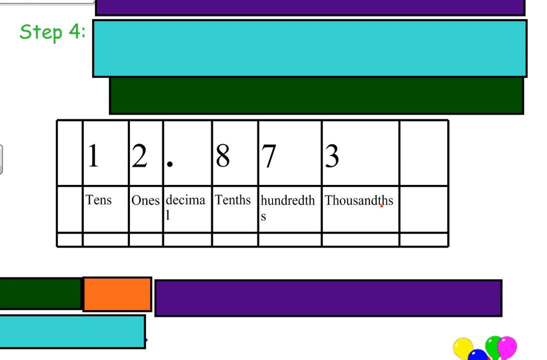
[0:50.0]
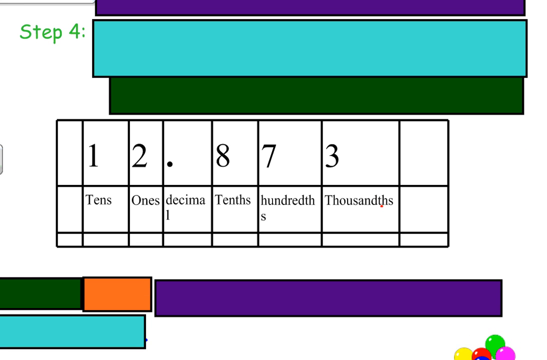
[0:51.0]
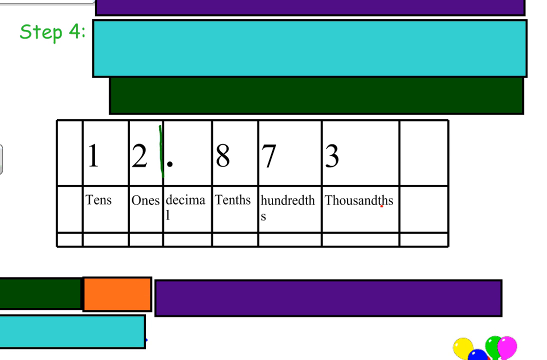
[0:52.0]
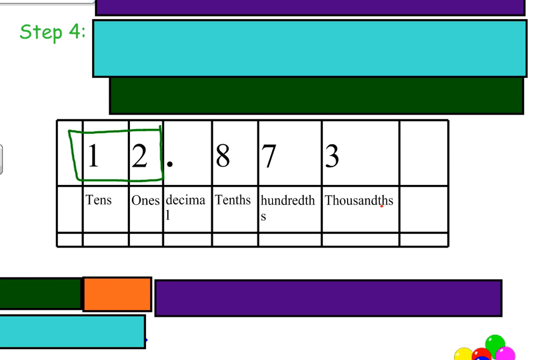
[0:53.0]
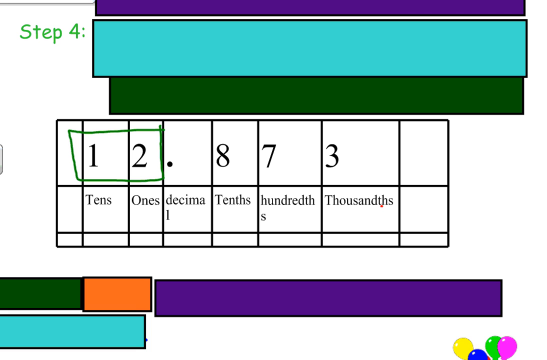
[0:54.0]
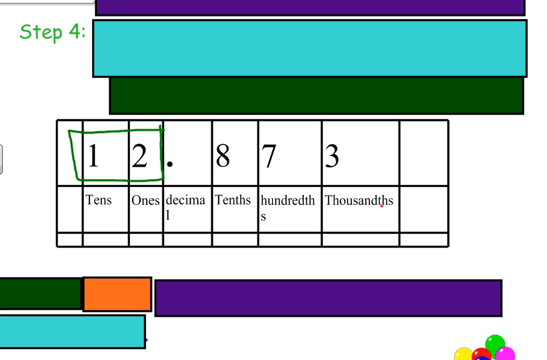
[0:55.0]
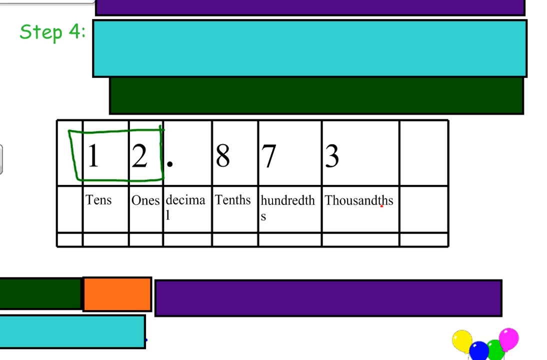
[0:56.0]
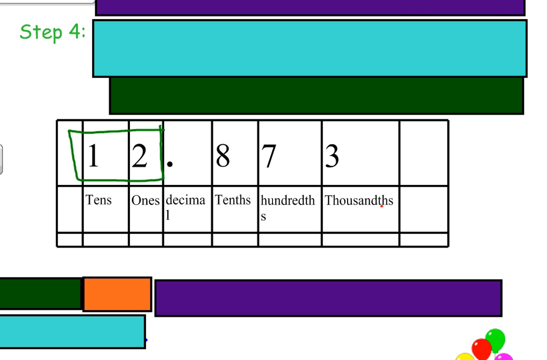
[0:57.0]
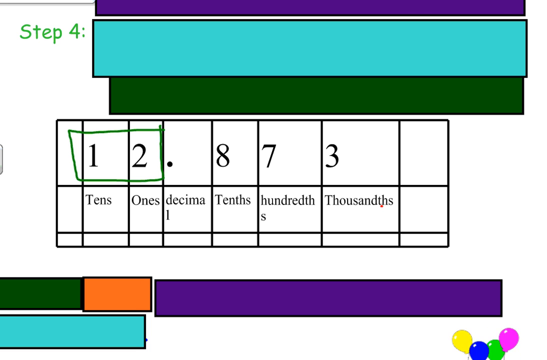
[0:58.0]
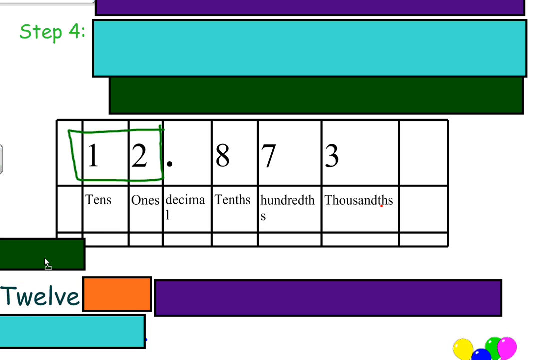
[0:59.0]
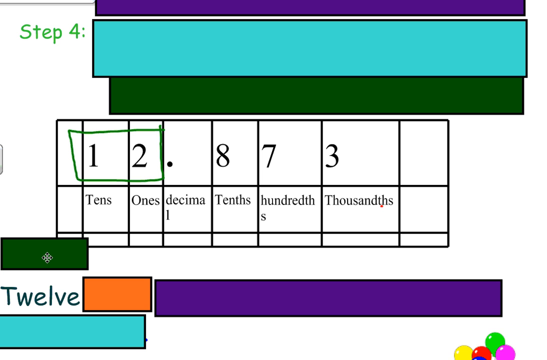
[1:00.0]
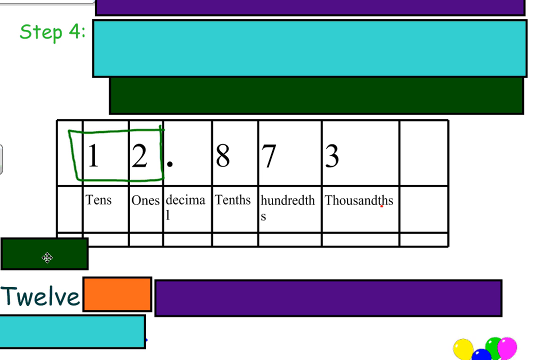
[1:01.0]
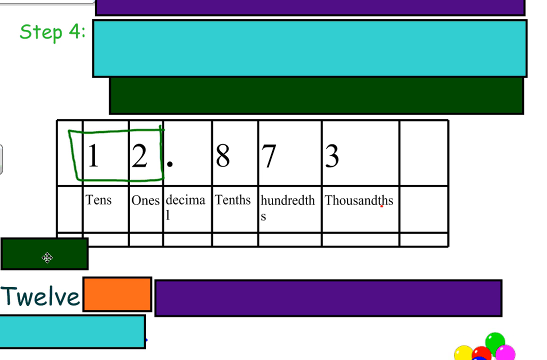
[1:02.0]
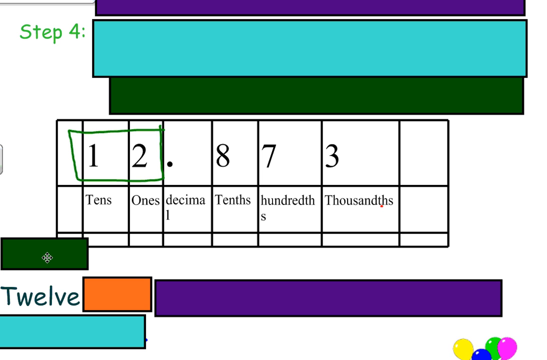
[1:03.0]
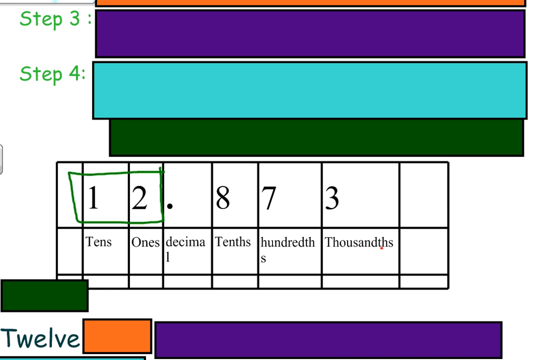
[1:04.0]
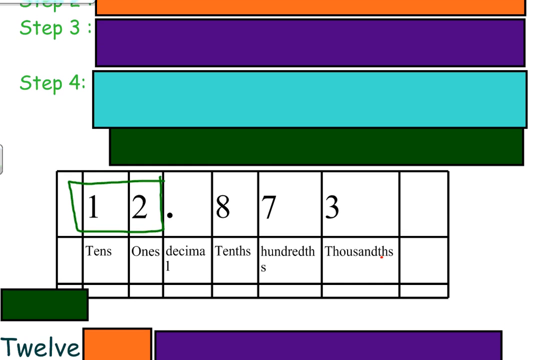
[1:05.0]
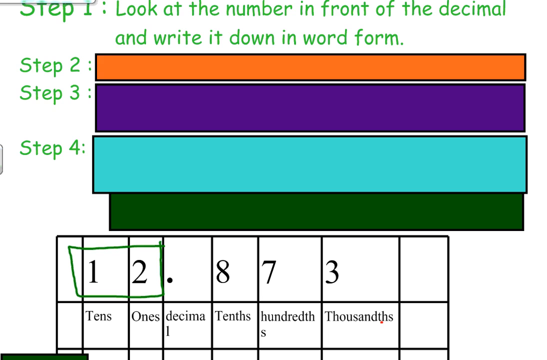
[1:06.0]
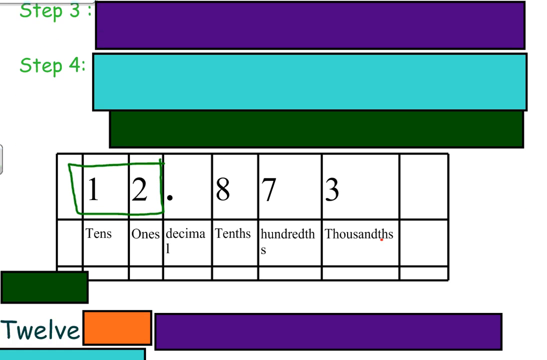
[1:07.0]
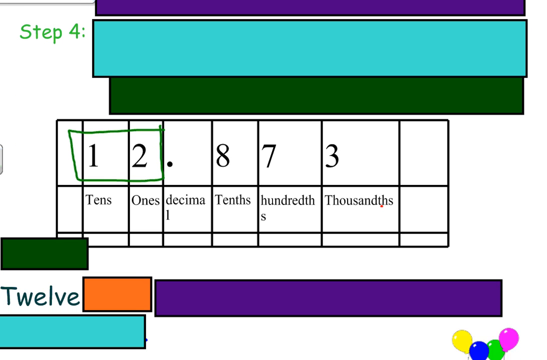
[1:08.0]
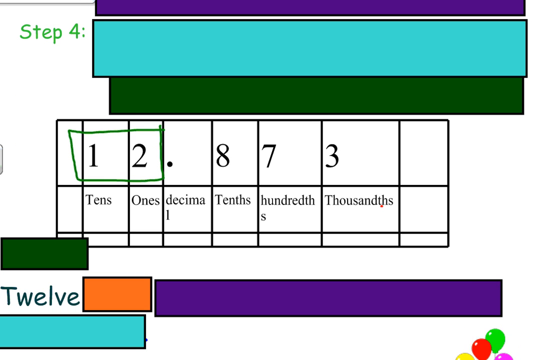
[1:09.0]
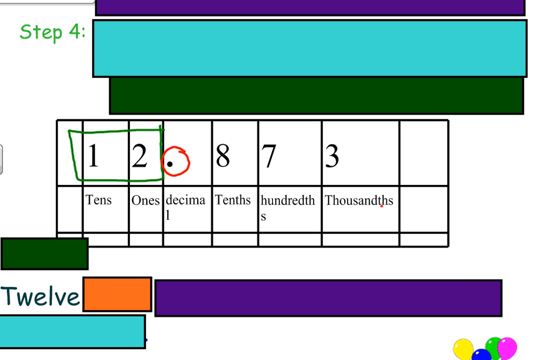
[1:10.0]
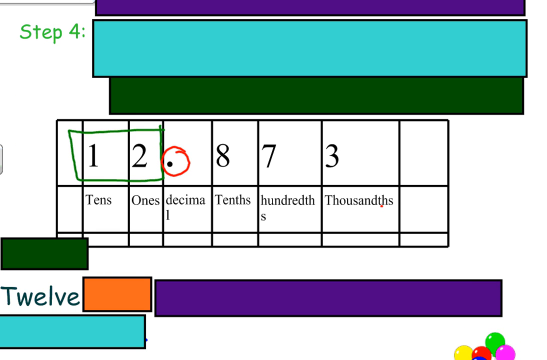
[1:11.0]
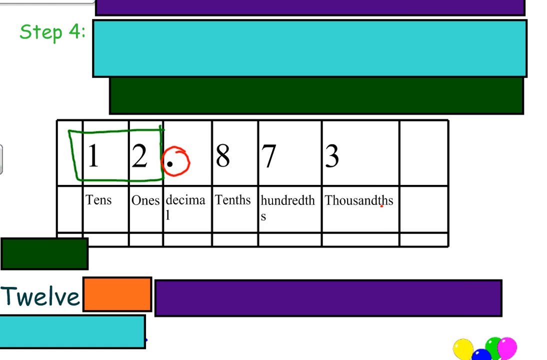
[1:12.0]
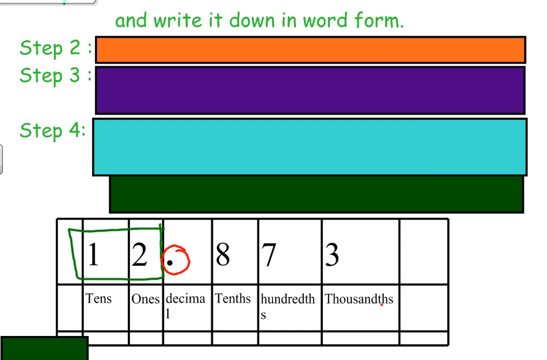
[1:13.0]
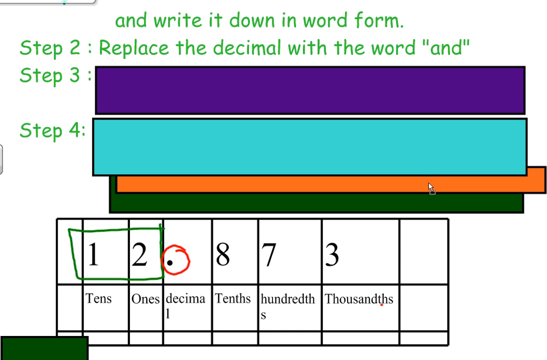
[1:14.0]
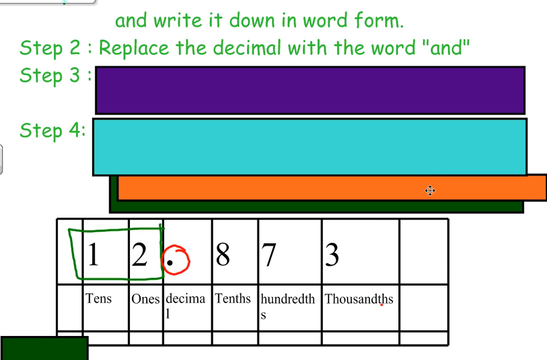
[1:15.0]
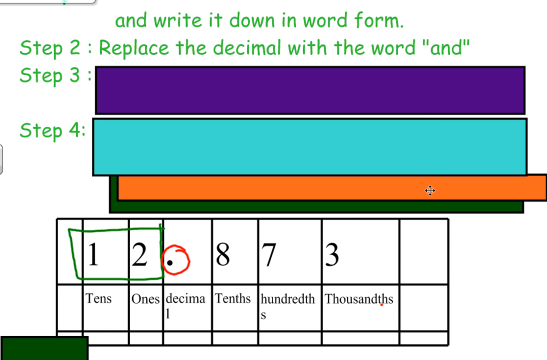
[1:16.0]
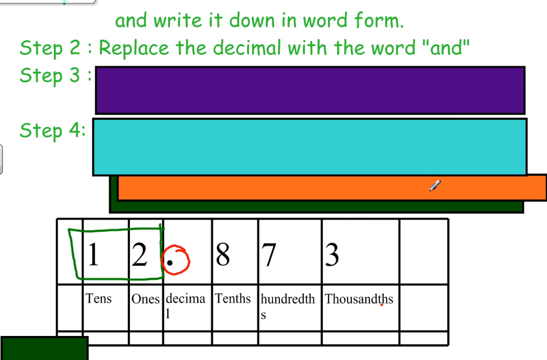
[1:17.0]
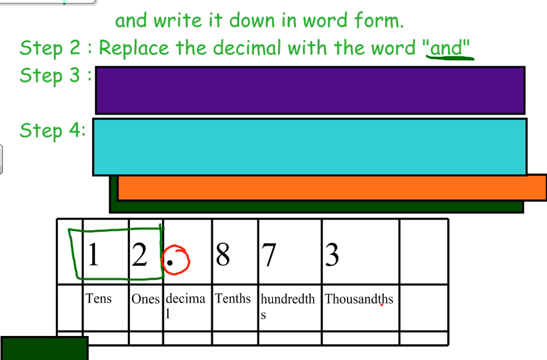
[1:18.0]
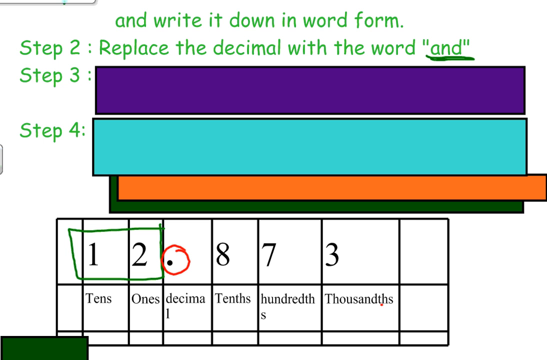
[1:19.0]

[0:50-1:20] The digits one and two are separated out in green, forming the number 12, which is the number in front of the decimal. The video moves on to Step 2. Shaded colors appear: green, orange, blue and black.